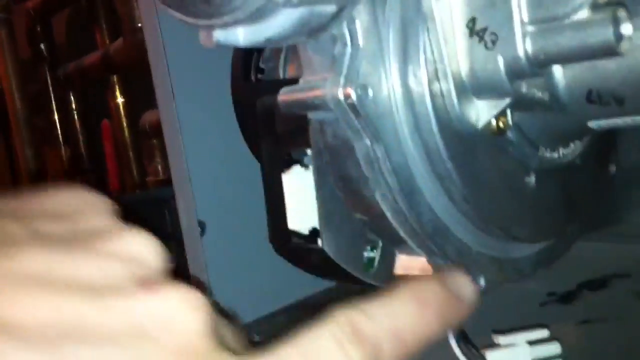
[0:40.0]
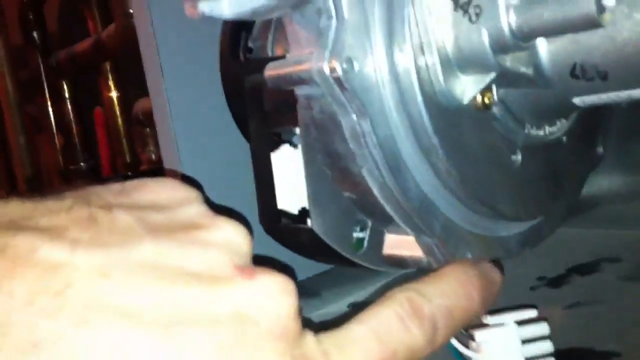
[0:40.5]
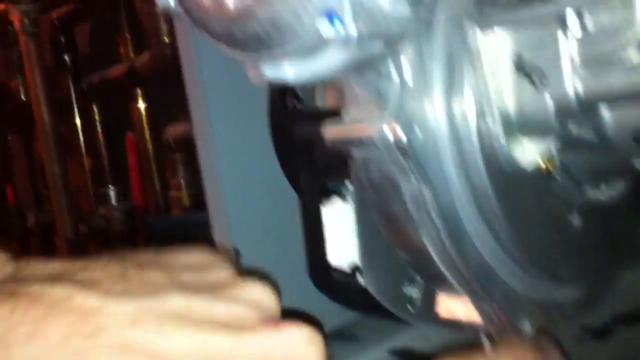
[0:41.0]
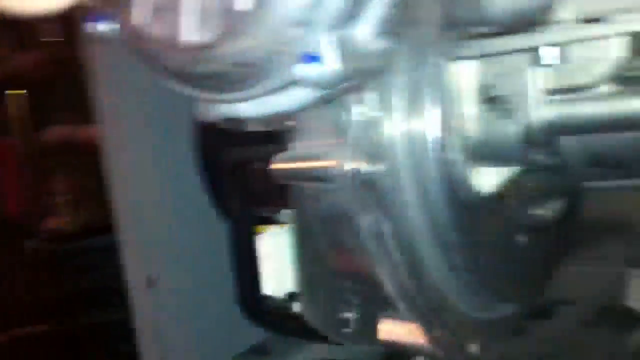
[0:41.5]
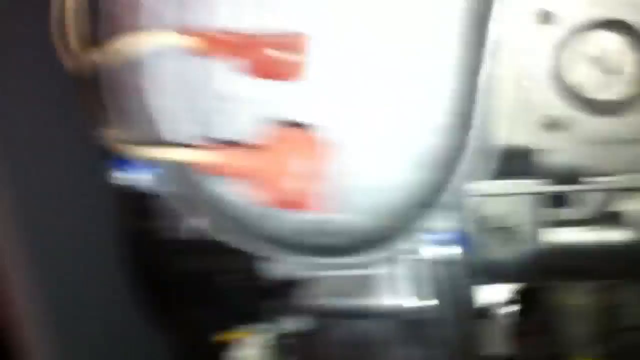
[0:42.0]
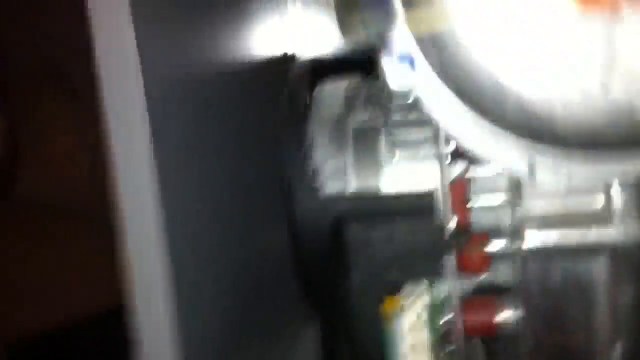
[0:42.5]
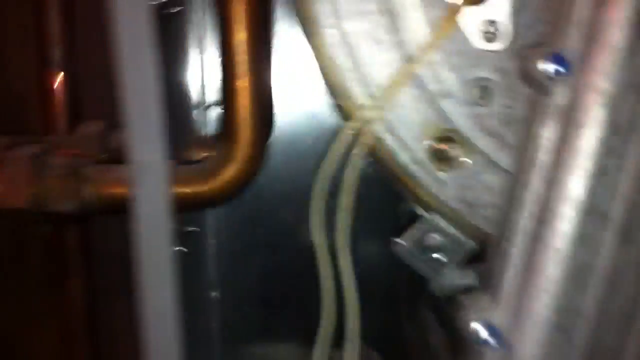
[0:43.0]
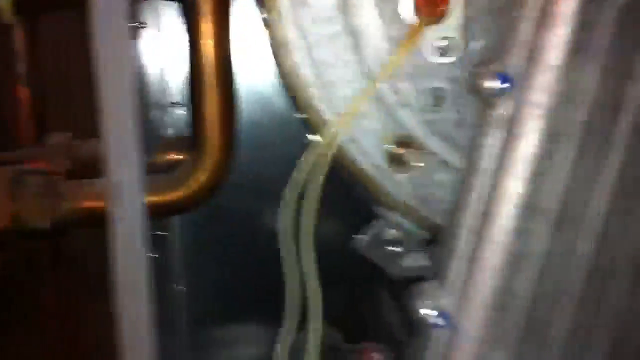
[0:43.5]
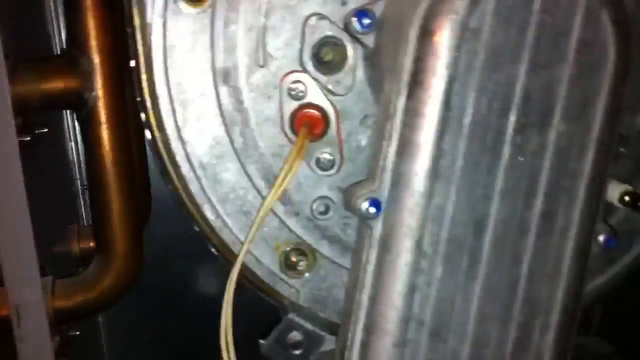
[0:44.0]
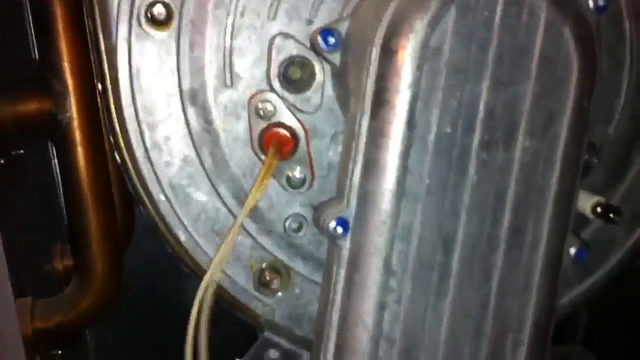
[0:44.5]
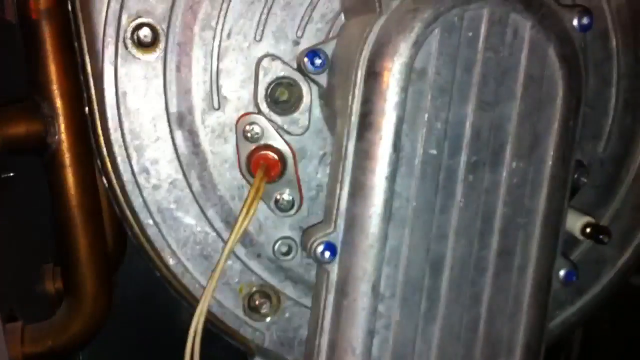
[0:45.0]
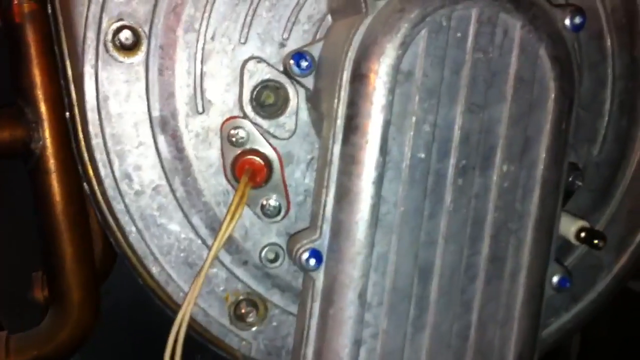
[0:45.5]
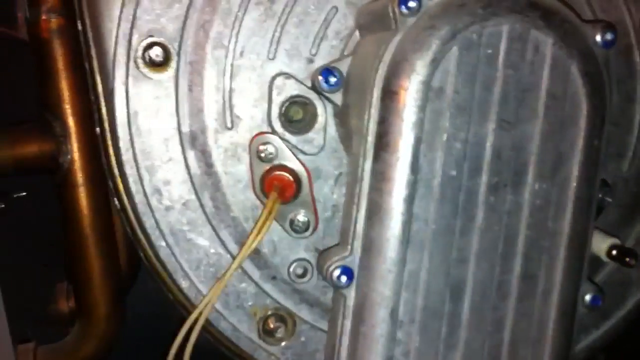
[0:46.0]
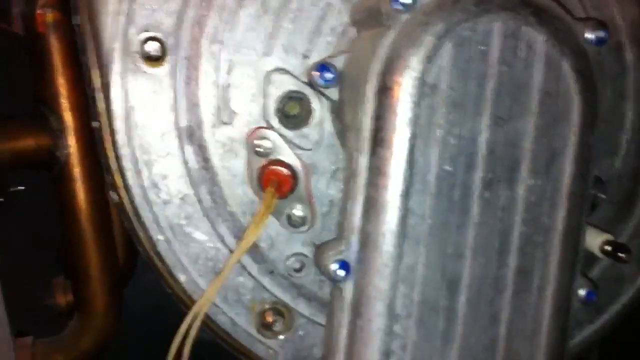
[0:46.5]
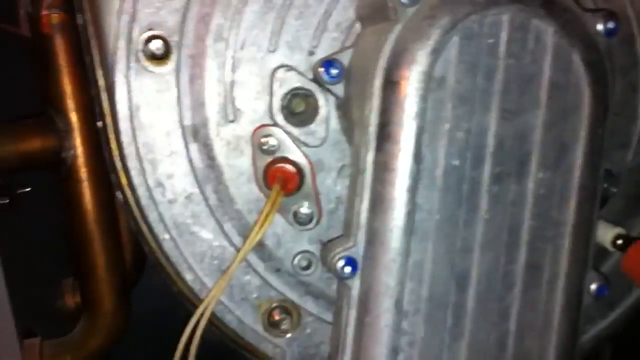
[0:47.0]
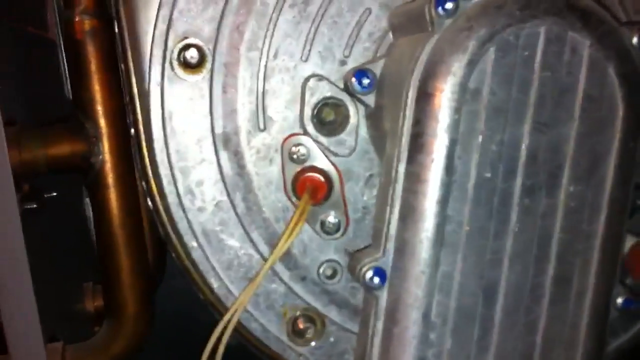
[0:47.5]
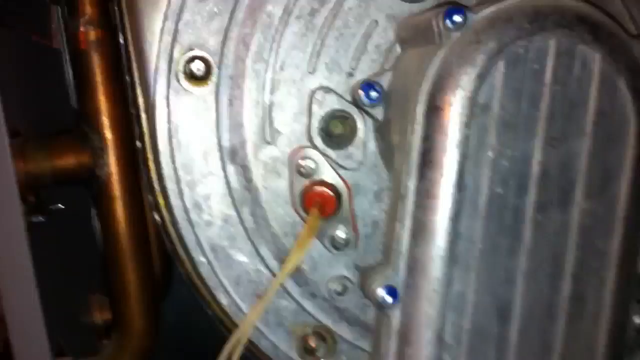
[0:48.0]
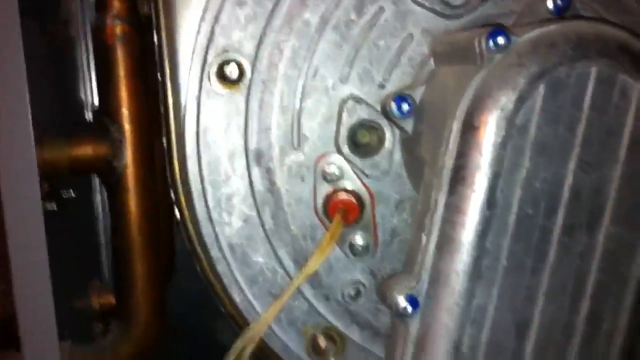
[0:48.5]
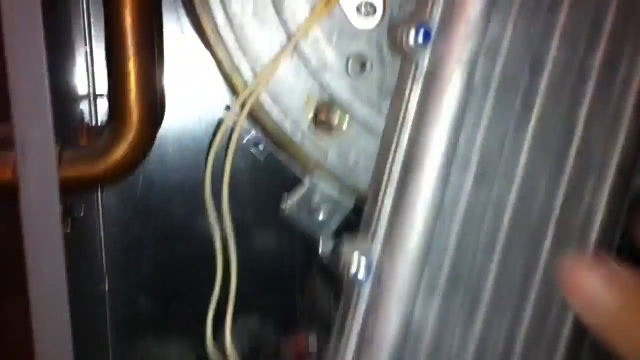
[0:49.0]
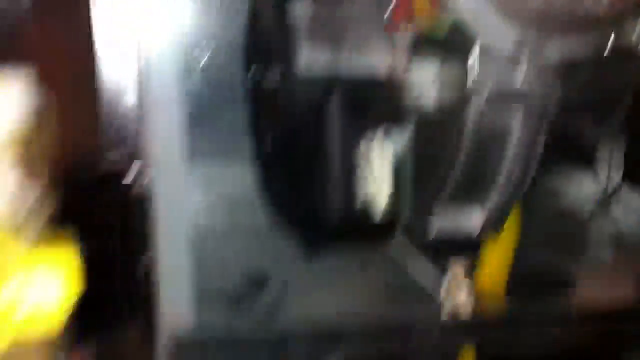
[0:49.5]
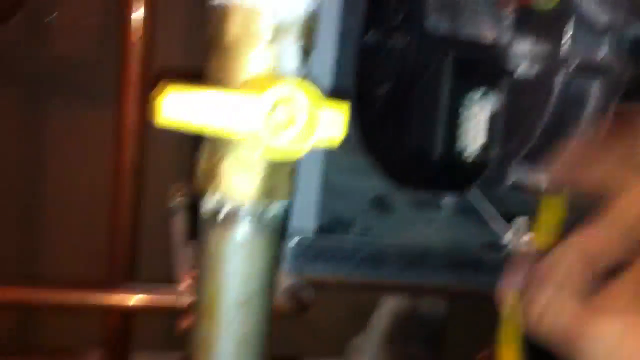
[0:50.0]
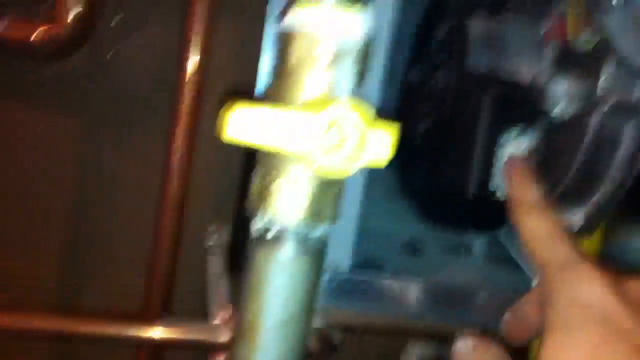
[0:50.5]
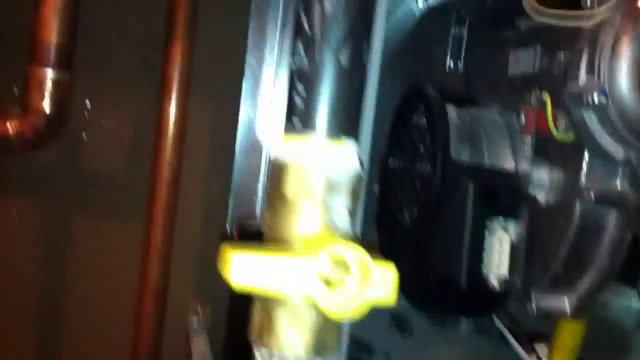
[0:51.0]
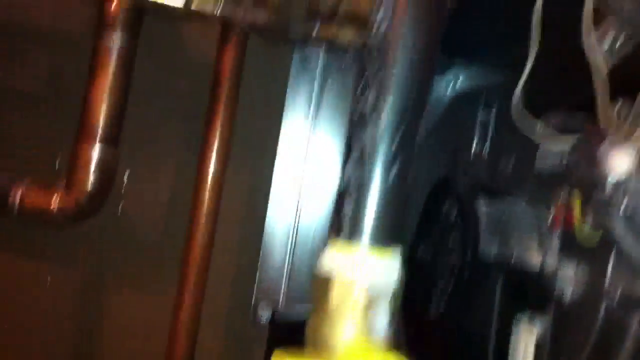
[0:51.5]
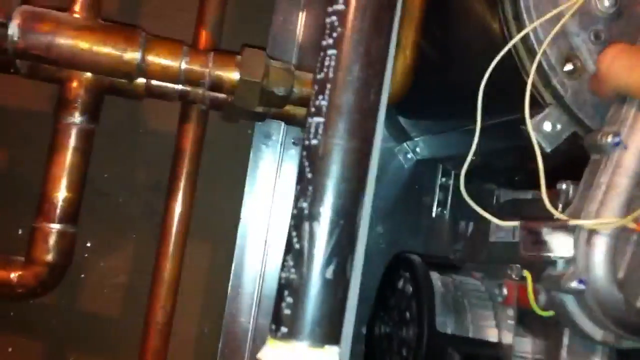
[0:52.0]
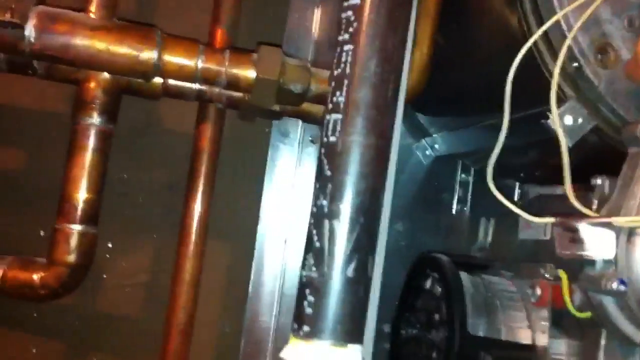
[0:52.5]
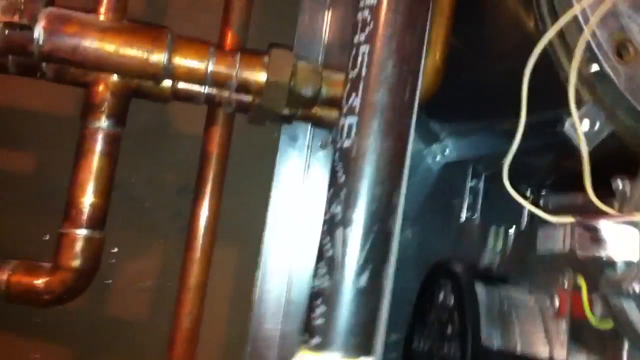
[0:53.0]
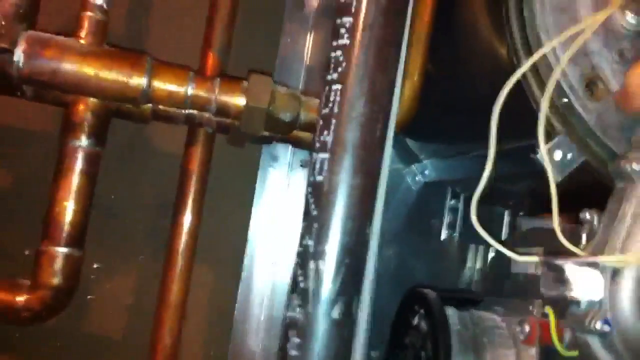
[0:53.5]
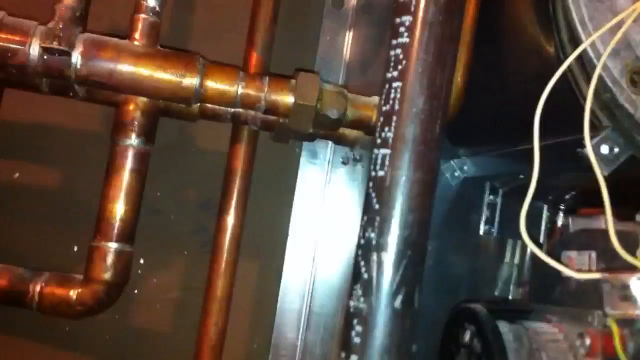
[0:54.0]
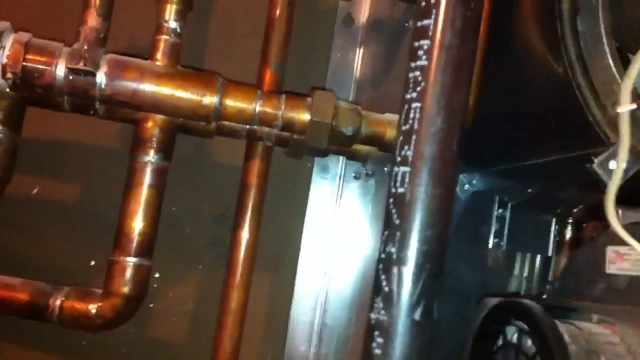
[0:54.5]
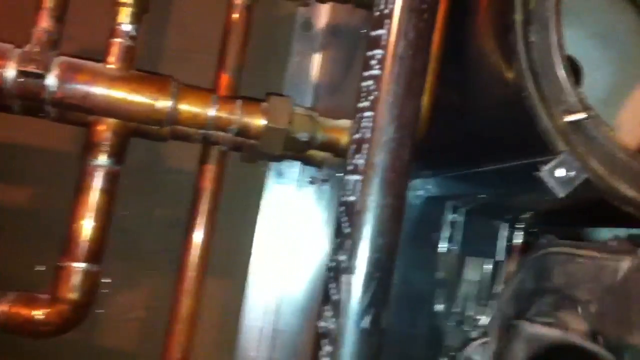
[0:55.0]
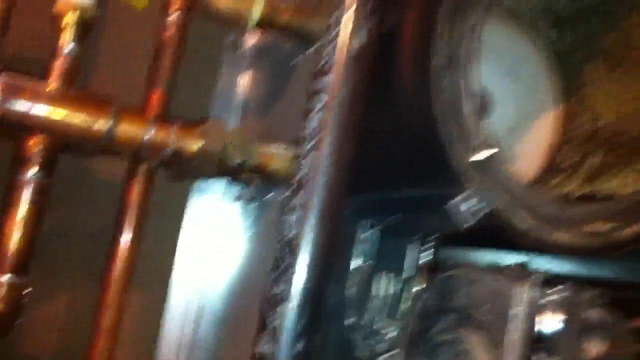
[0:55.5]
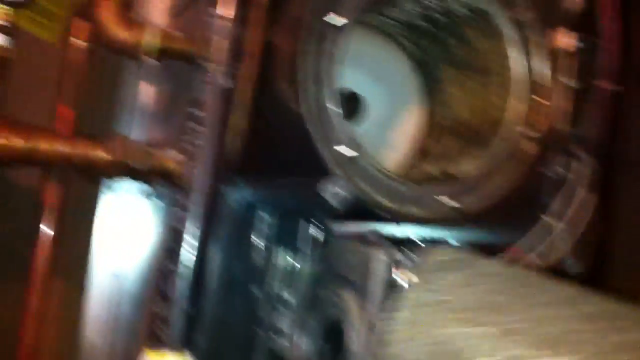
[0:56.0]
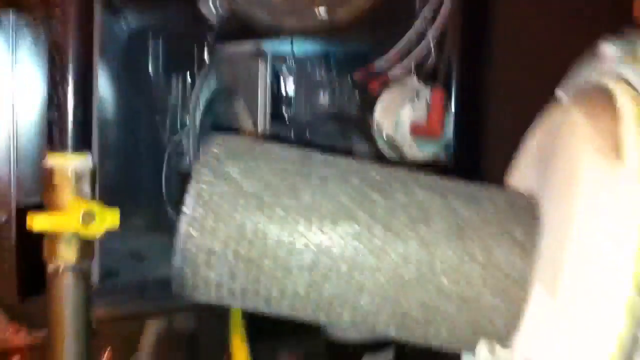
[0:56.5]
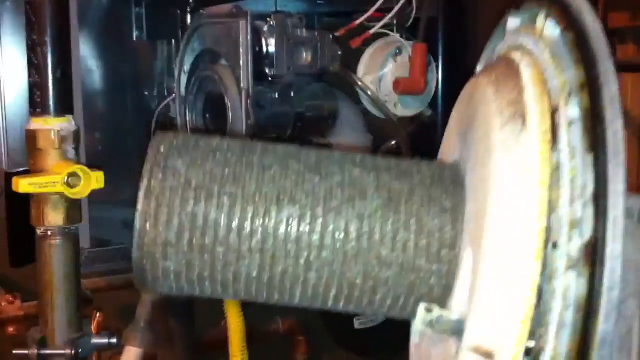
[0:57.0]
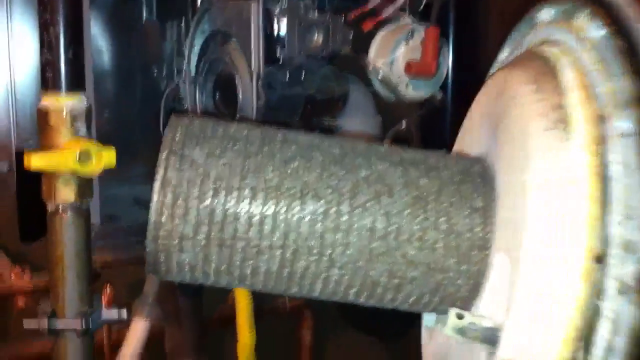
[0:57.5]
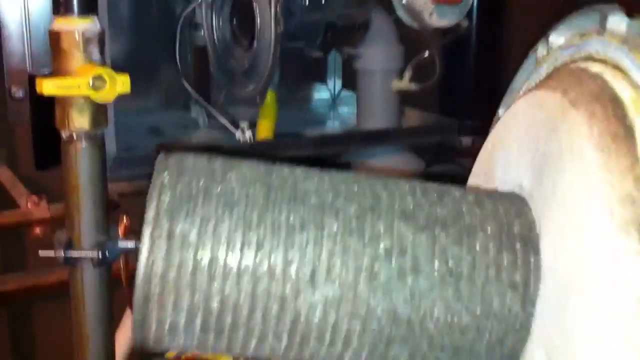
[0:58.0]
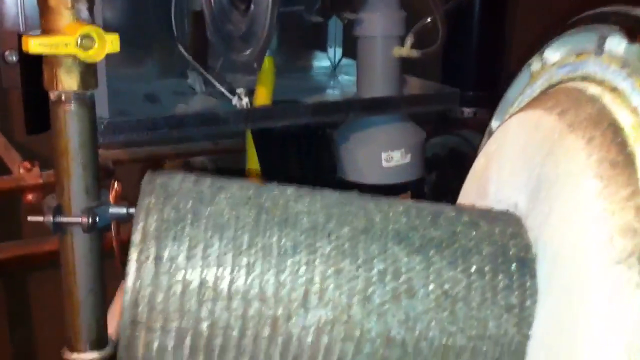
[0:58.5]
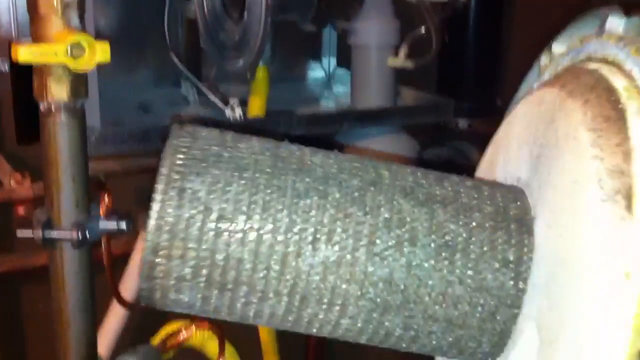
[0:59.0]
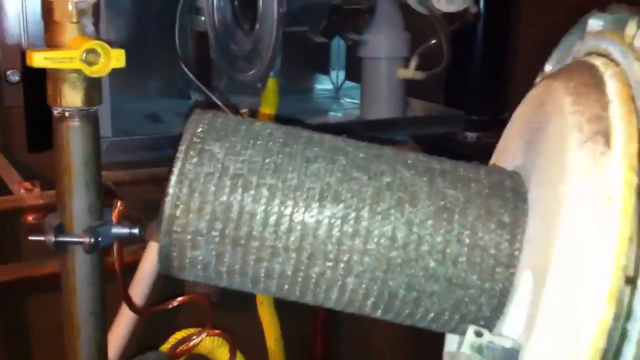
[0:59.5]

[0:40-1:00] The person points to the silver on the machine and pulls on the wire part while shining a light on it. They touch the motor part and pull on it, and it appears to come apart: they pull part of the machine off, revealing a little silver coil part. There is no text on the screen, and the camera is extra zoomed in, so the setting is not visible.